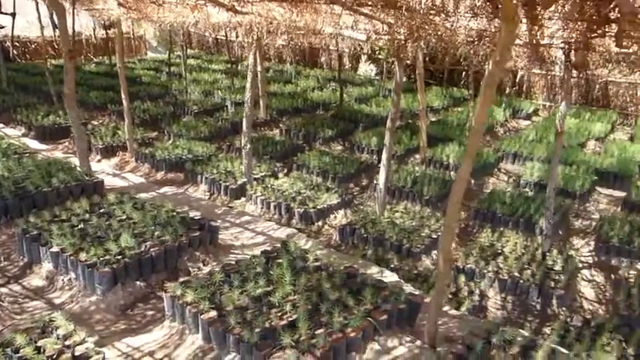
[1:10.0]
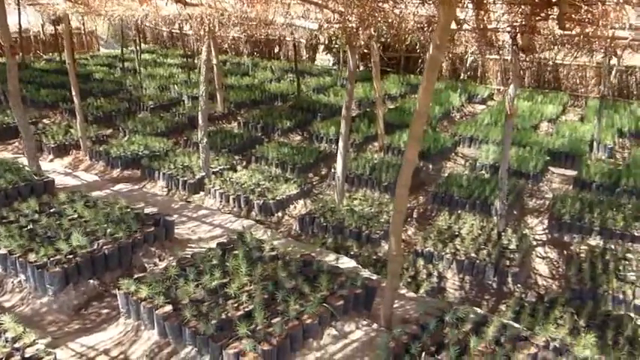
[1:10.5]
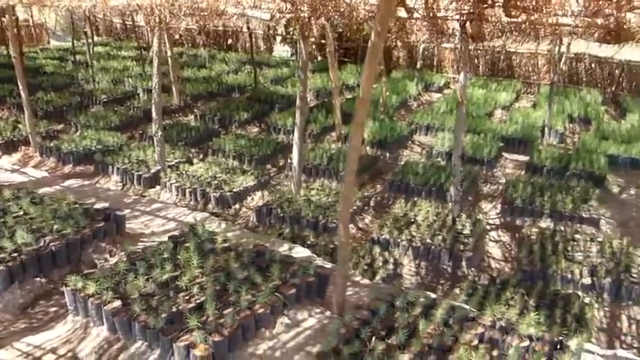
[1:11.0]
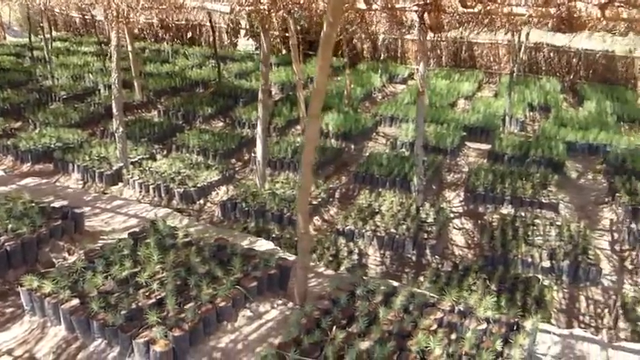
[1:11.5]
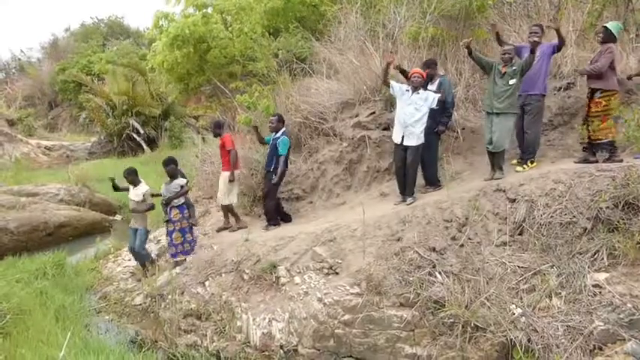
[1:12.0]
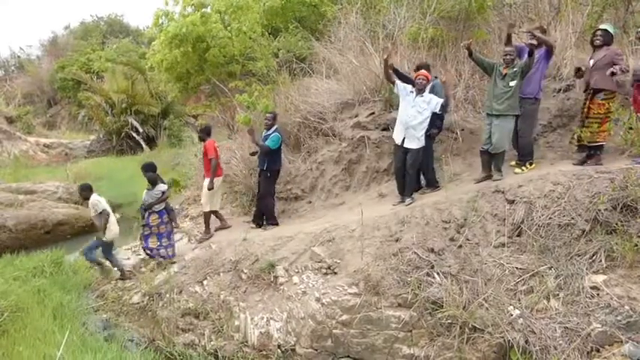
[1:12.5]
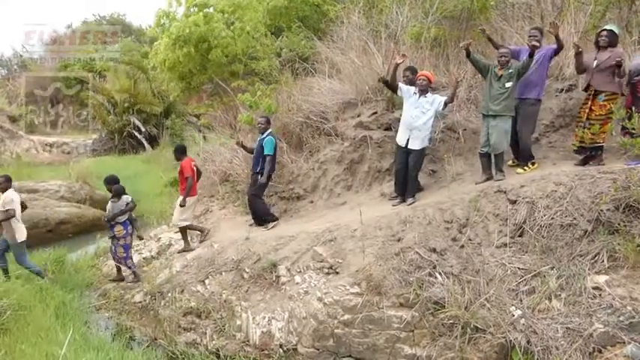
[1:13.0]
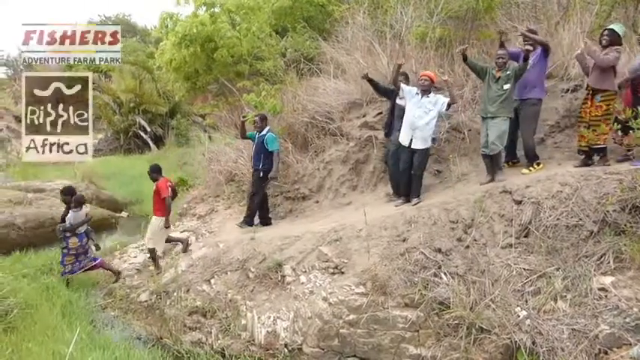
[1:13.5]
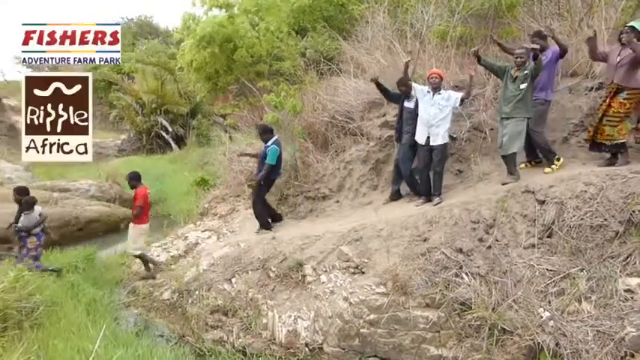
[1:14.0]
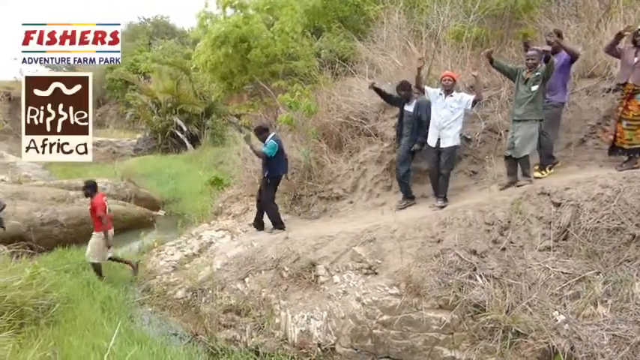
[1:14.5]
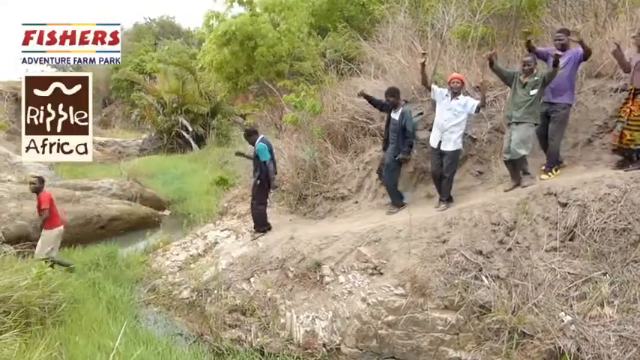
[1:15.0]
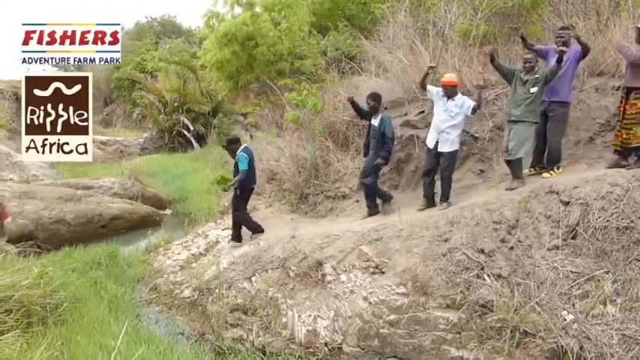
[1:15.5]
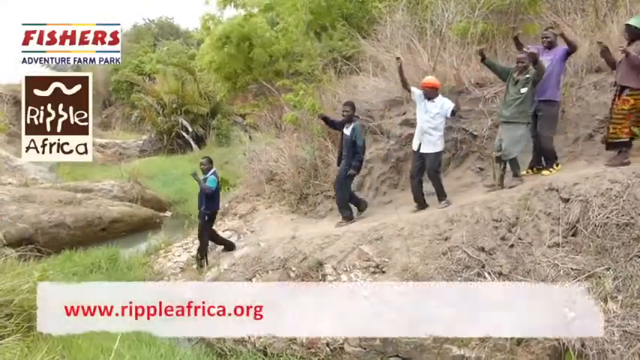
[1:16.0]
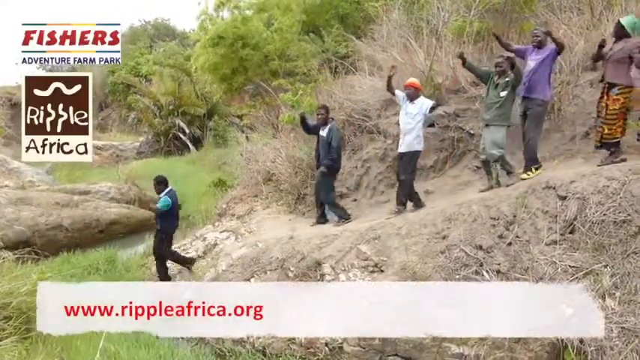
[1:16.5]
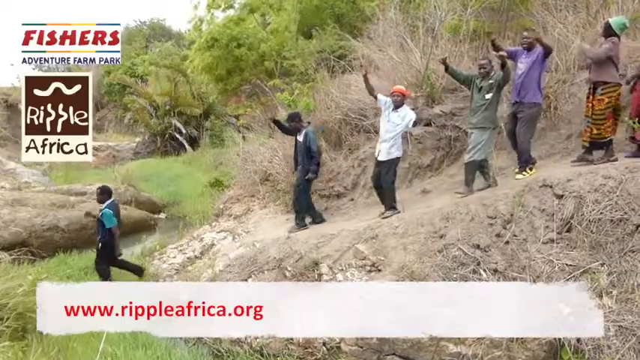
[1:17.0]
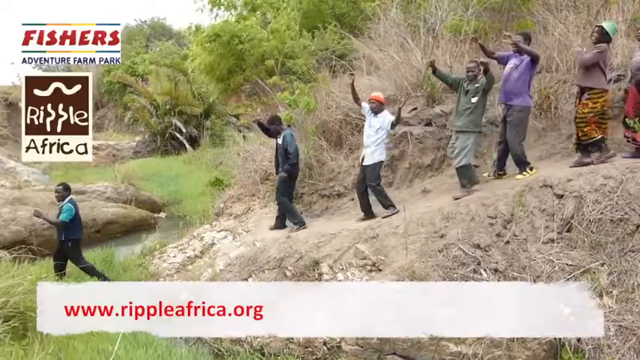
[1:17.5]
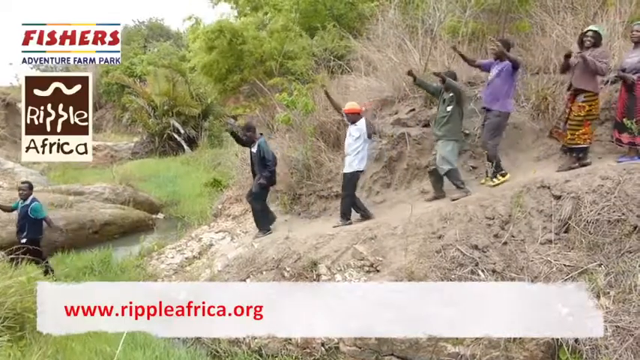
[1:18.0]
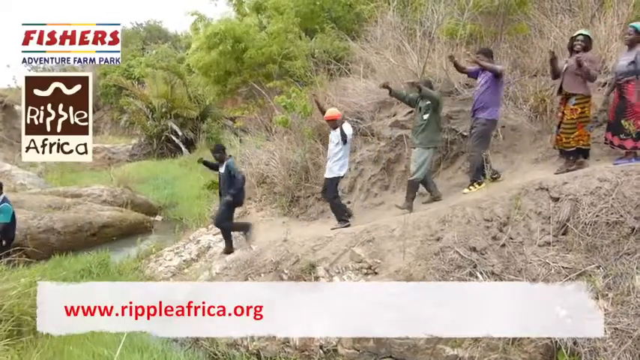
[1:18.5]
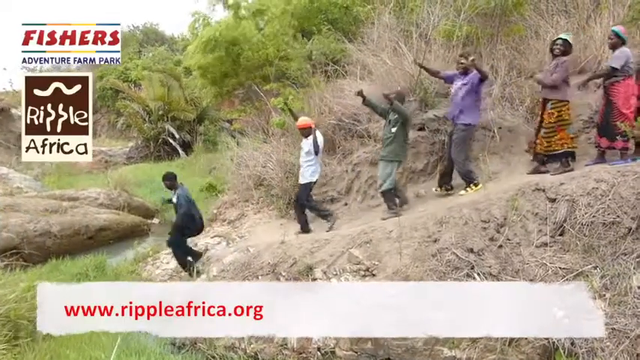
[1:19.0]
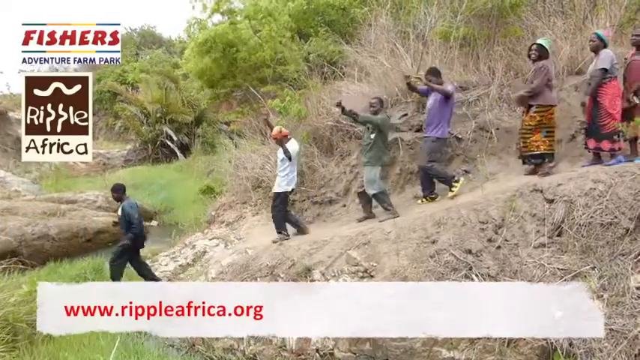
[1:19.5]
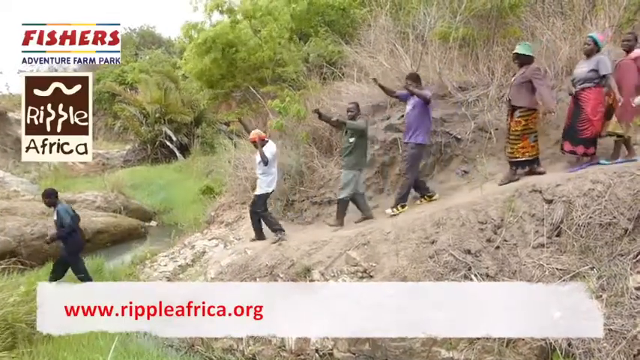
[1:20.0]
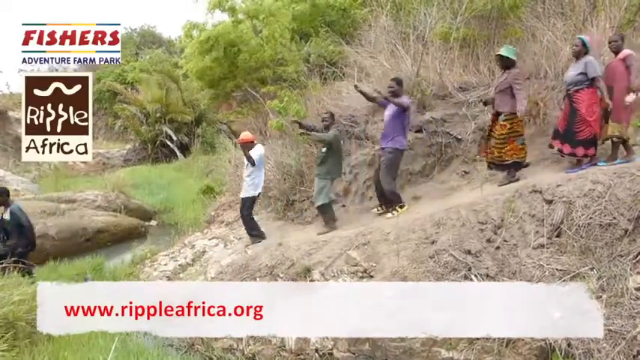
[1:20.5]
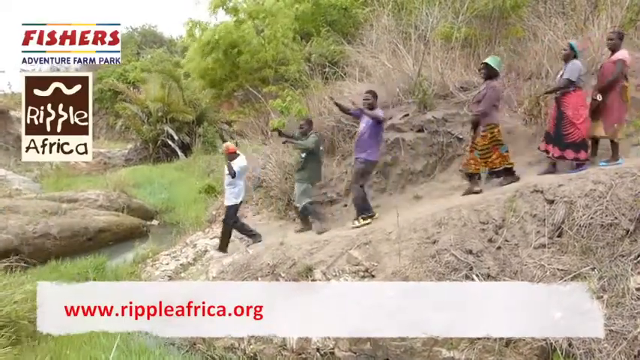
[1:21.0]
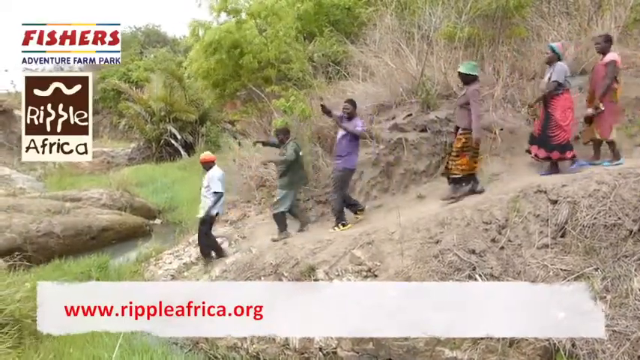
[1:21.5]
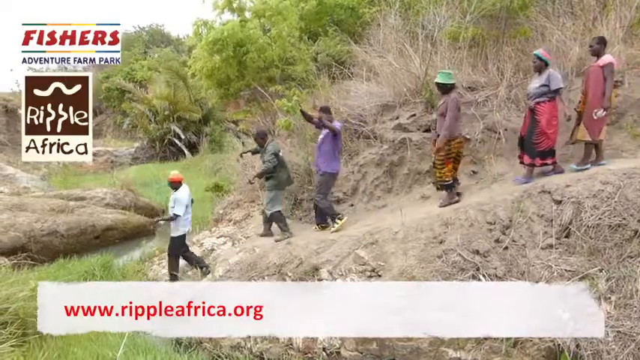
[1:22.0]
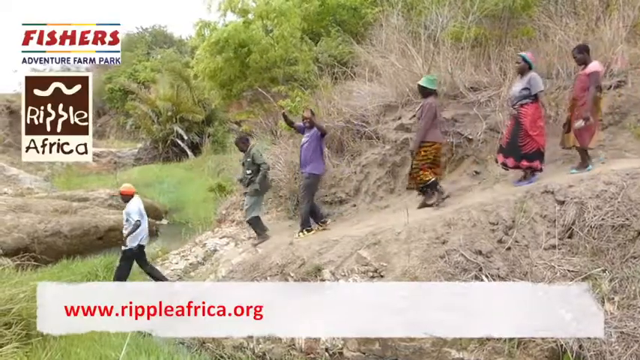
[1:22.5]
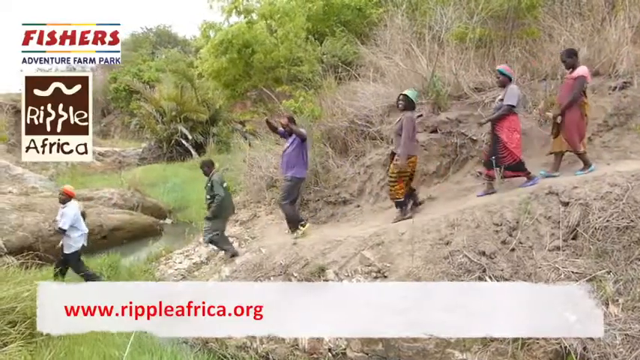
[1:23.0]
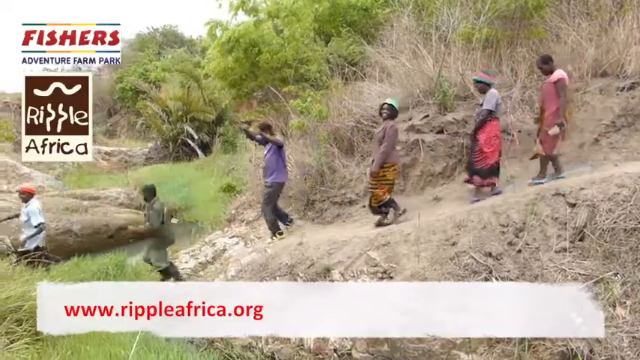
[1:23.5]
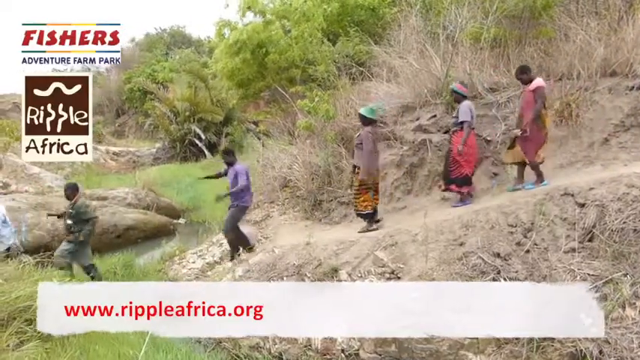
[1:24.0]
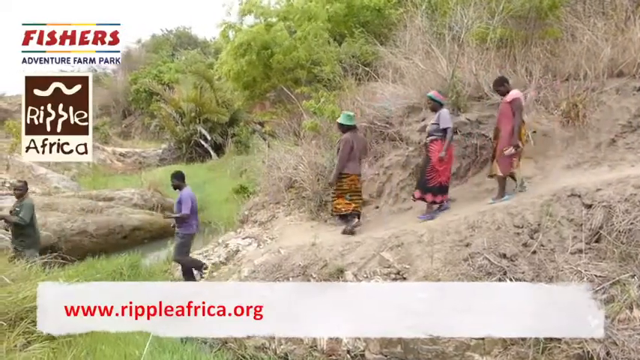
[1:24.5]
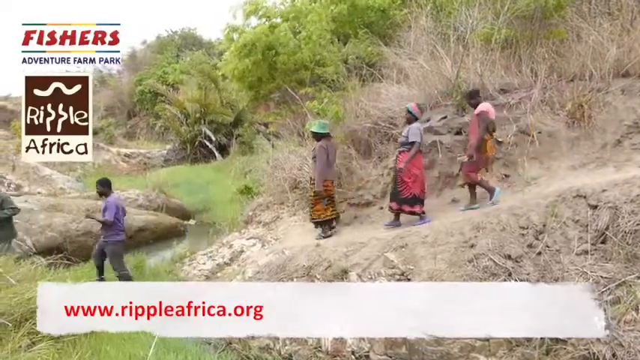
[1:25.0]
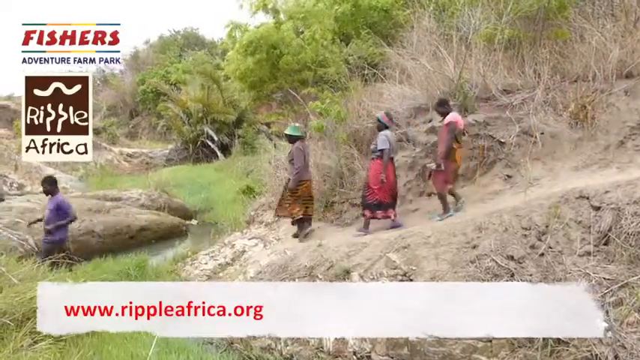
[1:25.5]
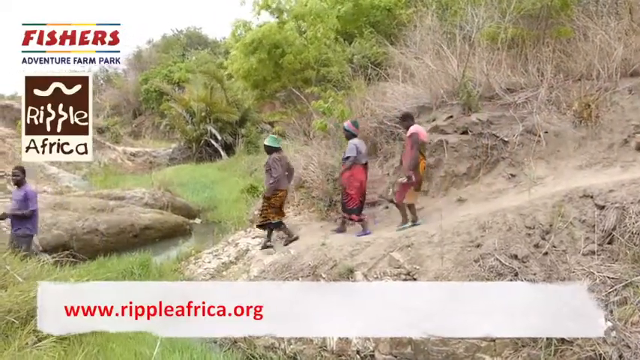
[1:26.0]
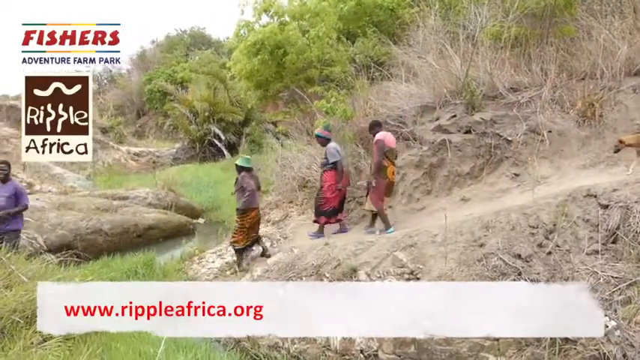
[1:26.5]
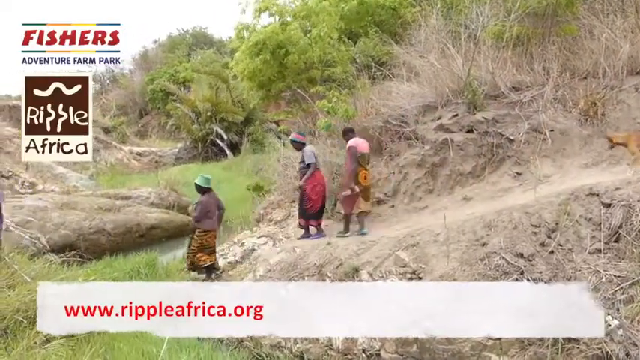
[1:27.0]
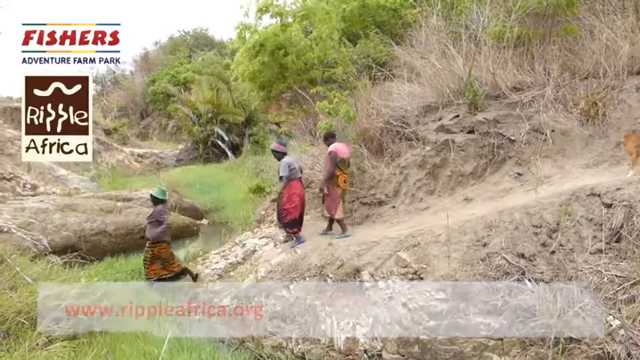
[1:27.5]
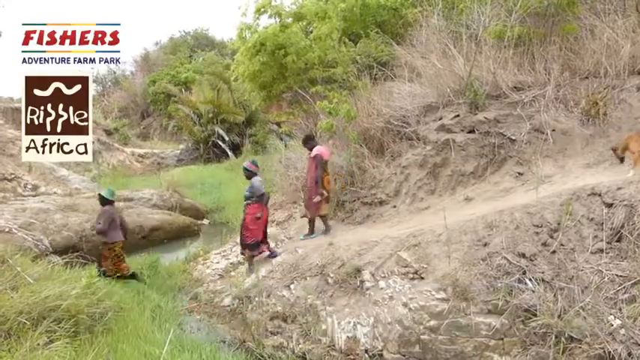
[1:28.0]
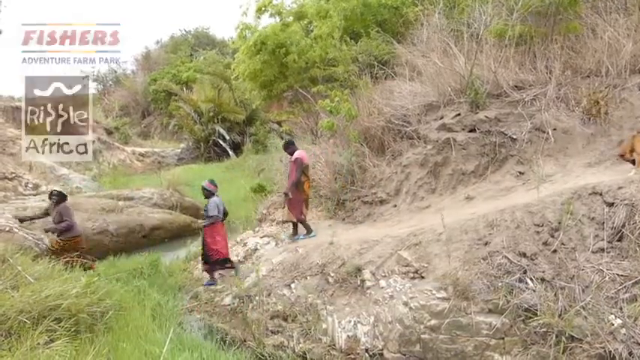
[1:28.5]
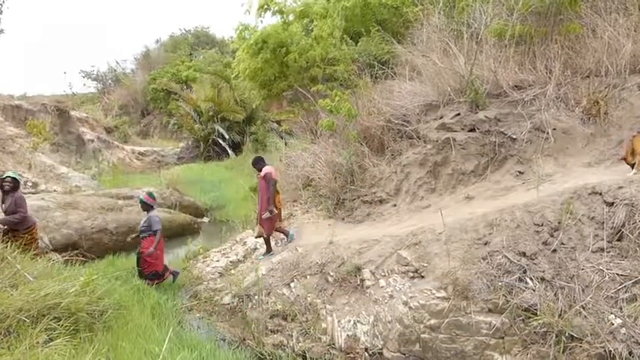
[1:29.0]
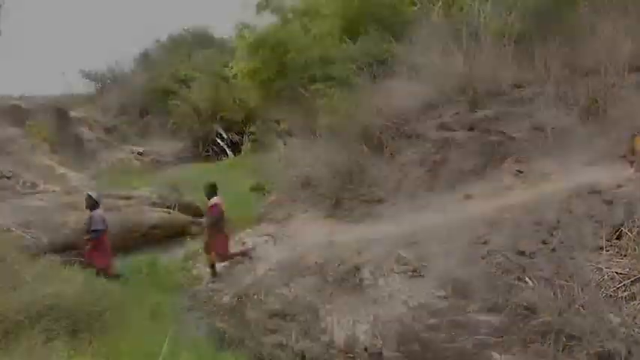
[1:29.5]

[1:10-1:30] The planters under the wooden roofs are shown, divided into different zones. A group of people say hello to the camera; some of them dance and seem happy, and some run down the hill, advancing as they dance. Logos appear: "fishers adventure farm park" and "ripple Africa", followed by a URL reading "www ripple Africa org". The people who were dancing then walk down the hill toward the right side of the camera, and a dog is visible. The people, including some women and a man, seem to be celebrating something and seem happy as they come down the hill together. They may be workers at the adventure farm park, or visitors who came to experience the park.